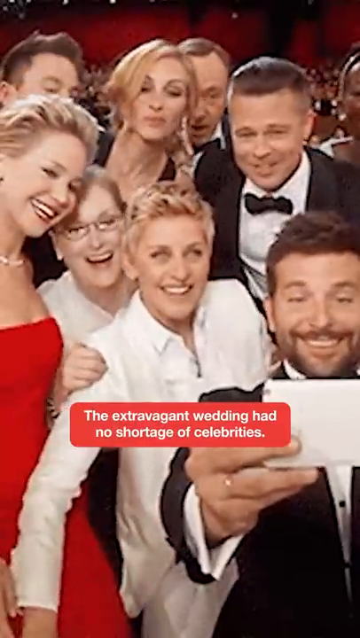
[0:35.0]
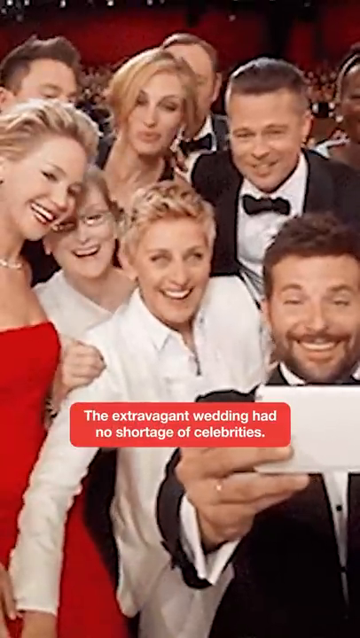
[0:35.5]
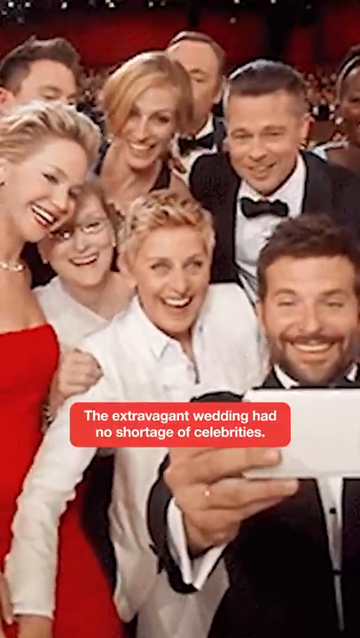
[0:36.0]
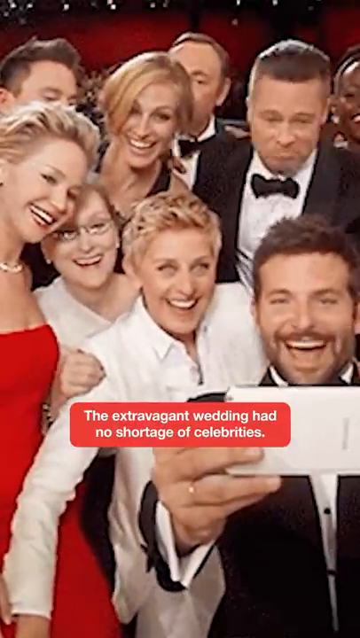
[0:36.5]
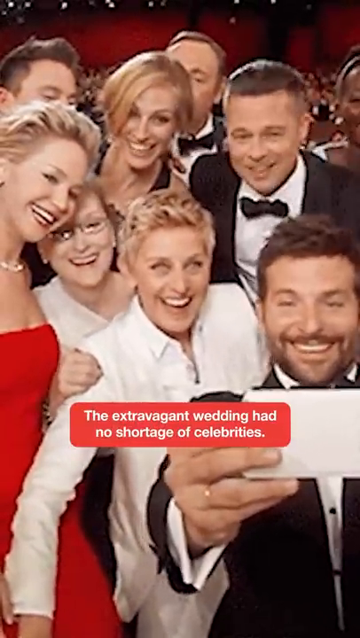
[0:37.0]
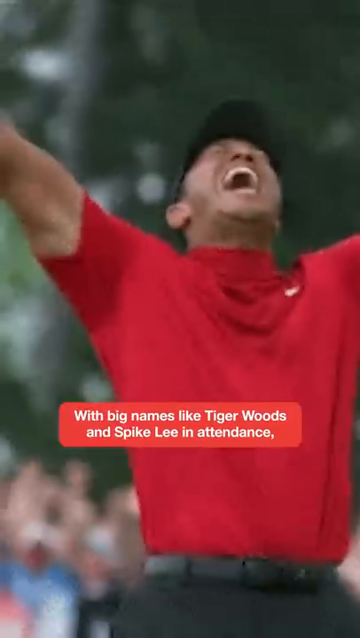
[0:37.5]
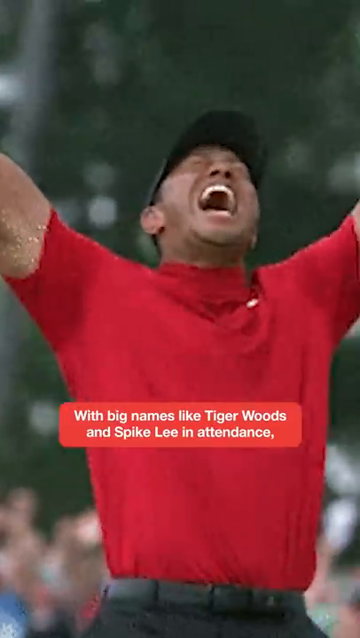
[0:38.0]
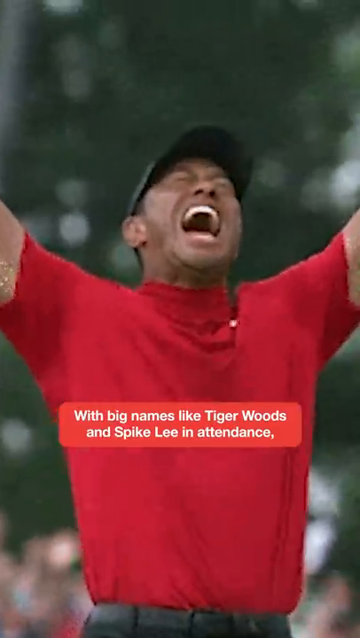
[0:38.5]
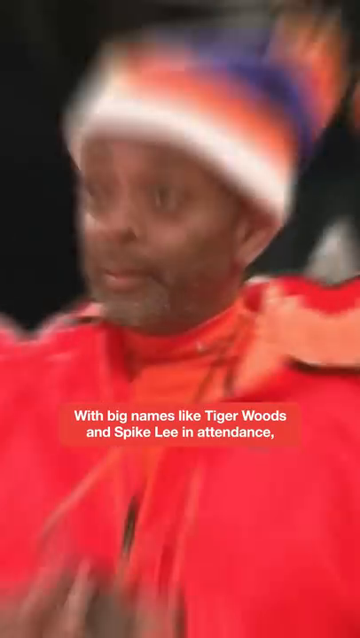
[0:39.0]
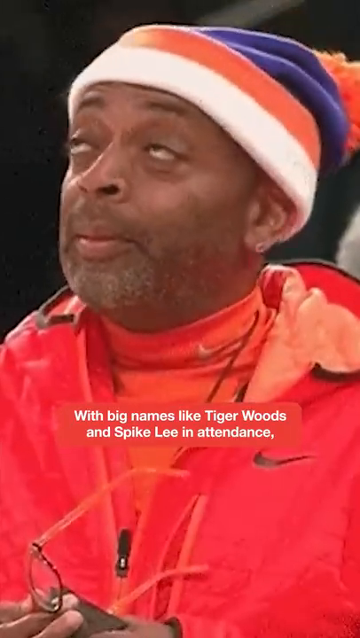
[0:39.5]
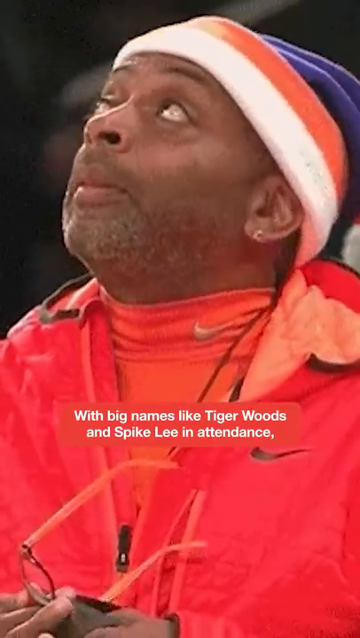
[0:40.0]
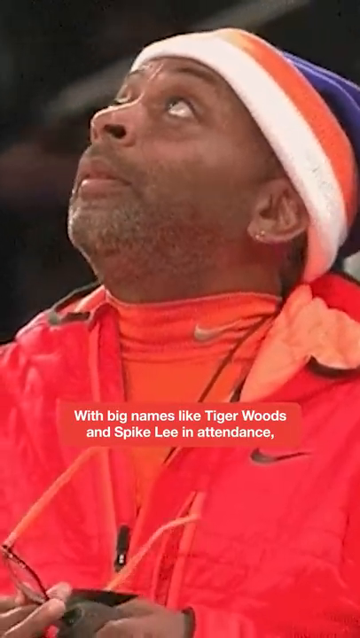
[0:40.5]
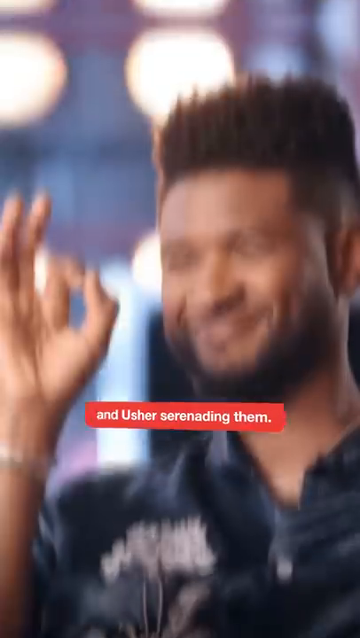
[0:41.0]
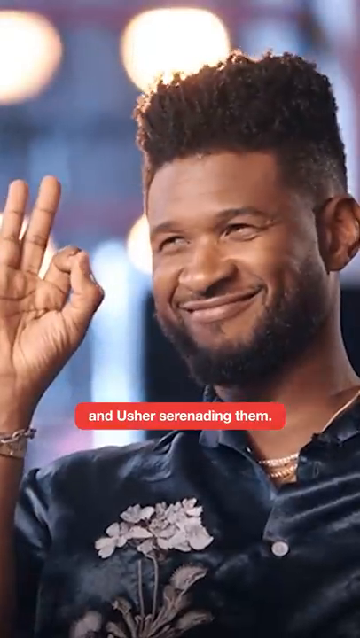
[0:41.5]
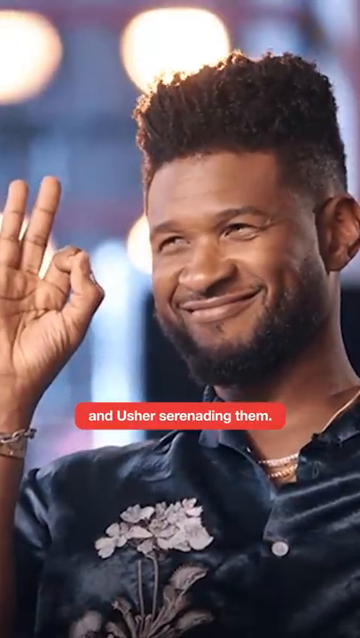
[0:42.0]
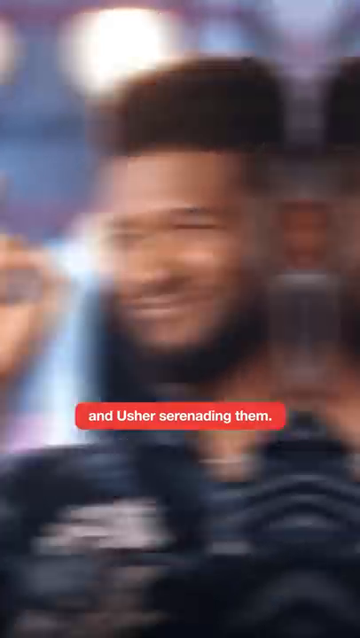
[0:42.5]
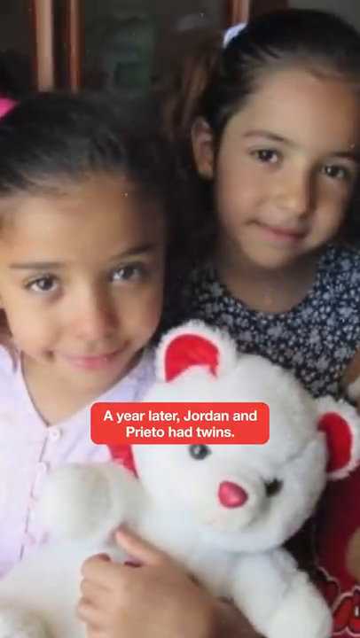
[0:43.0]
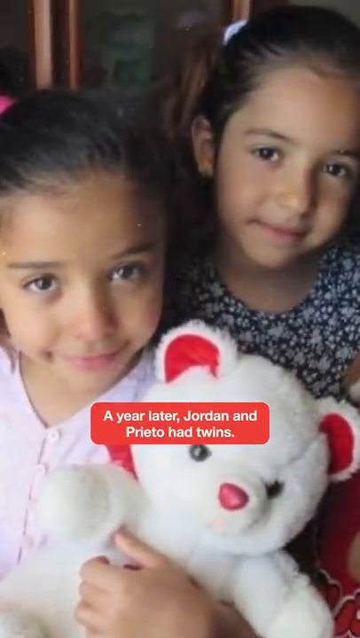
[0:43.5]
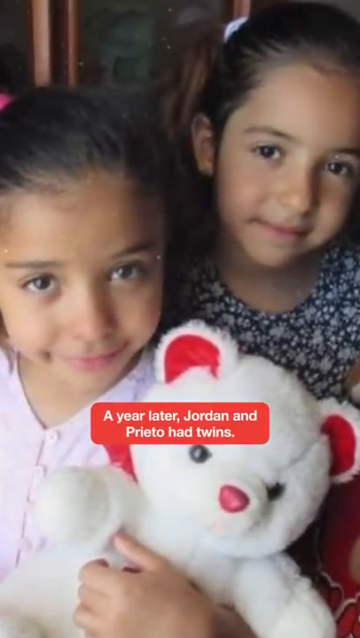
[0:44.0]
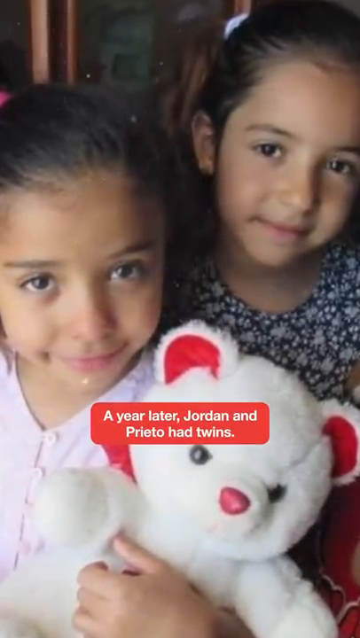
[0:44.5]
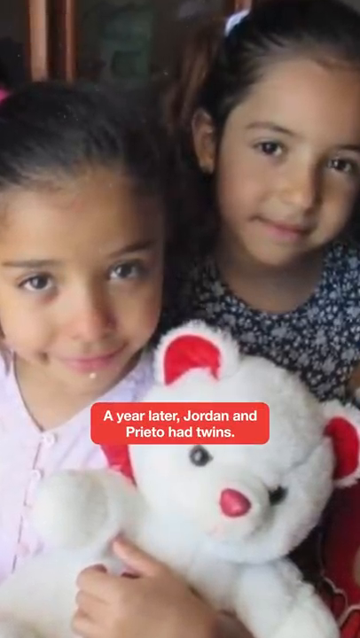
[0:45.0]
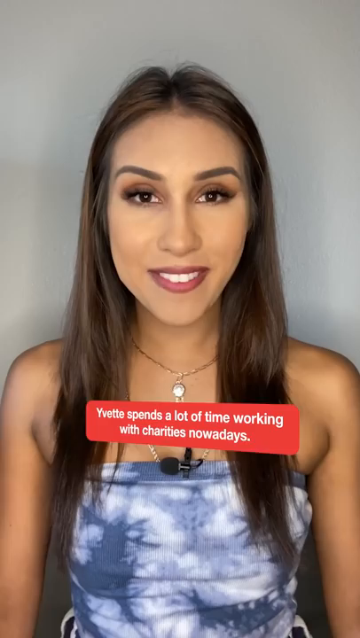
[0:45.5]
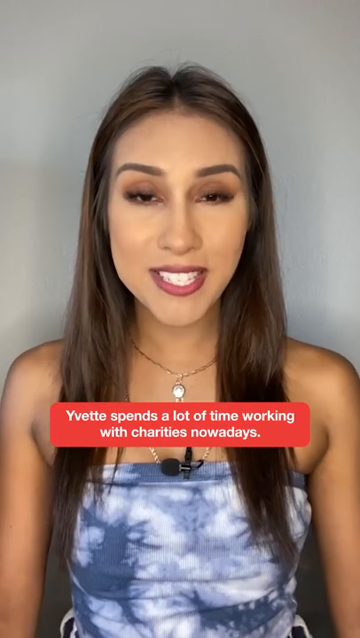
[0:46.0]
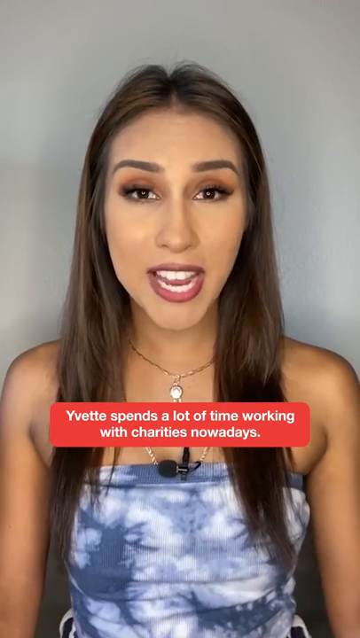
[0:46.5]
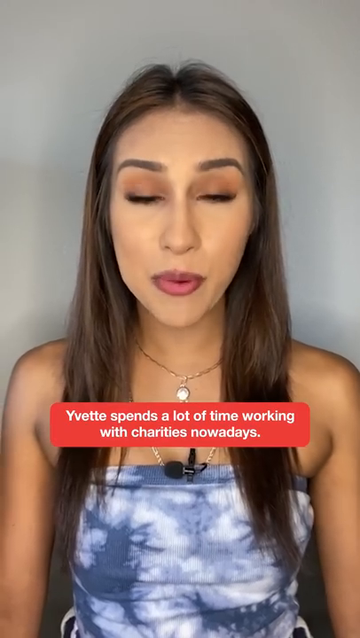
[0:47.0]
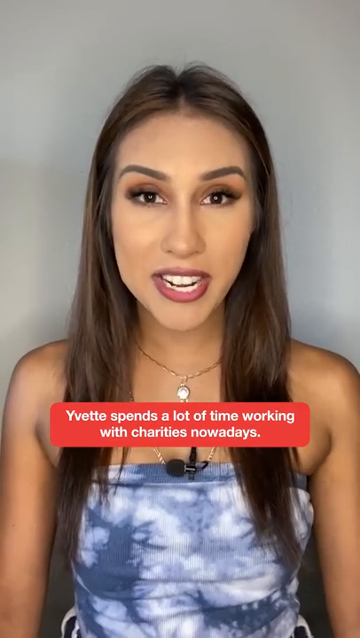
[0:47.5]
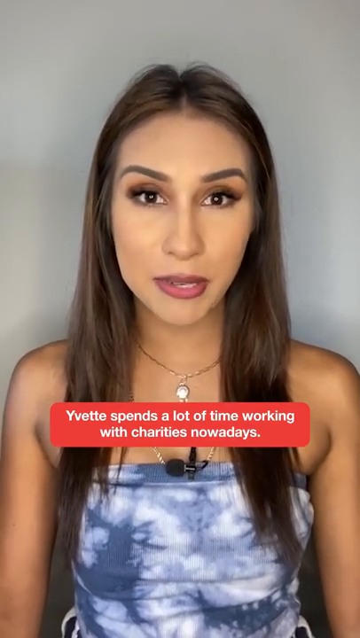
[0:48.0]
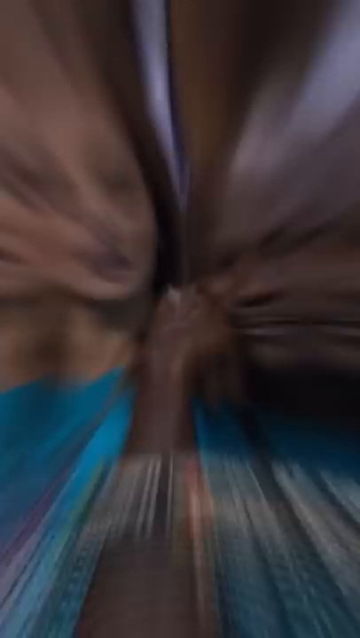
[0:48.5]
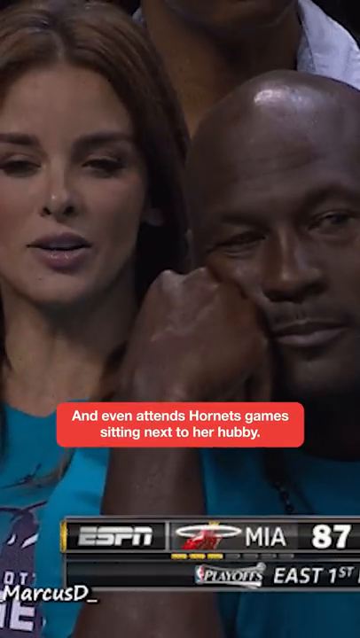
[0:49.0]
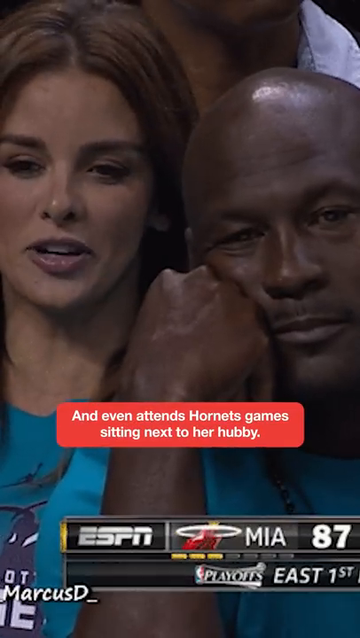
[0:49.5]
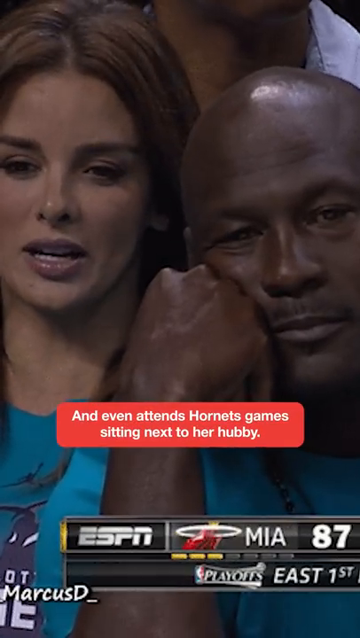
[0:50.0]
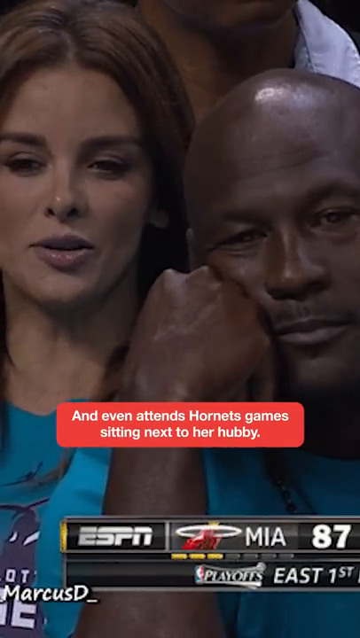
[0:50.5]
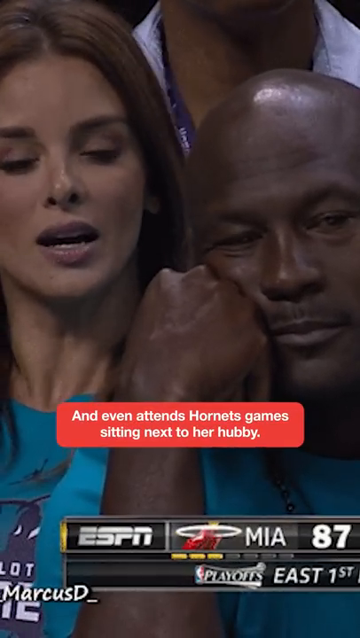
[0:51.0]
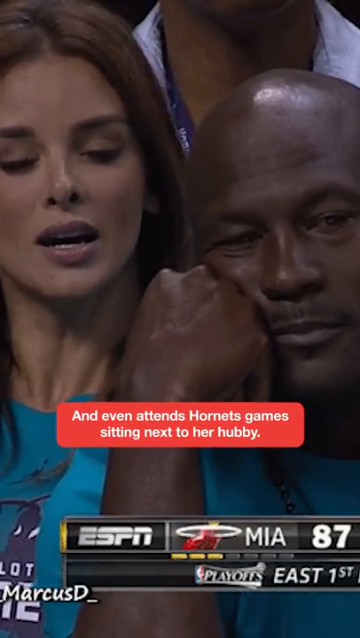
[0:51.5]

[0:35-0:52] Ellen DeGeneres is with a bunch of celebrities, and they appear to be taking a photo together at some event; Bradley Cooper and Brad Pitt are in the photo. Then Tiger Woods and Usher are shown, along with a director, and Michael Jordan appears with his wife again. Tiger Woods screams with his hands in the air as though he just won a golf game. Yvette is shown with Michael Jordan, and they appear to be watching some sporting event. Spike Lee is at a game. Finally, the two little girls Michael Jordan and Yvette have together are shown posing with a teddy bear.